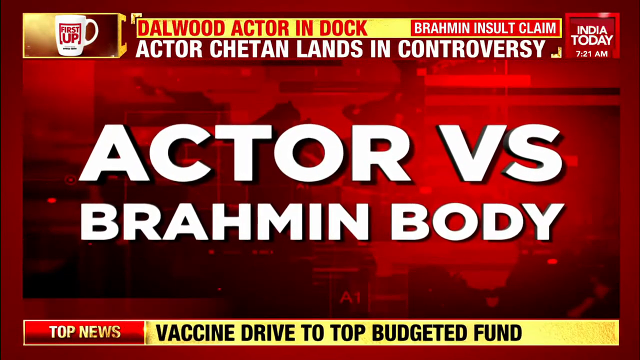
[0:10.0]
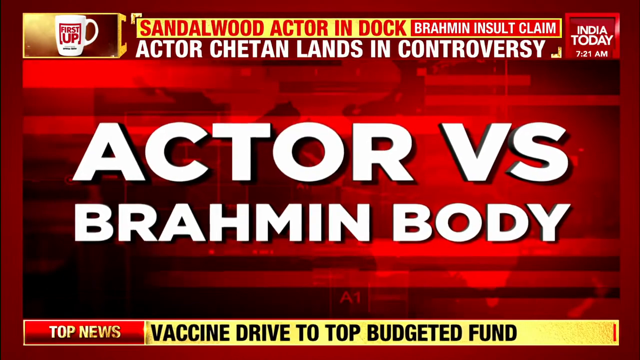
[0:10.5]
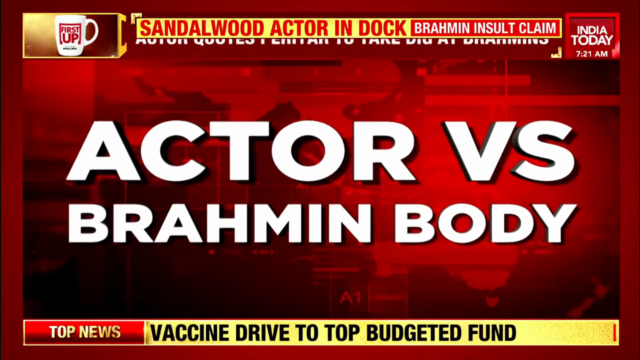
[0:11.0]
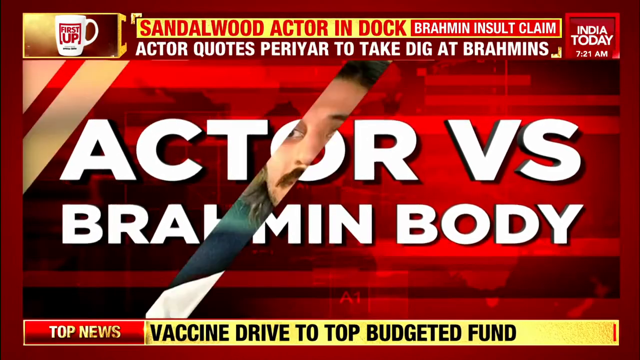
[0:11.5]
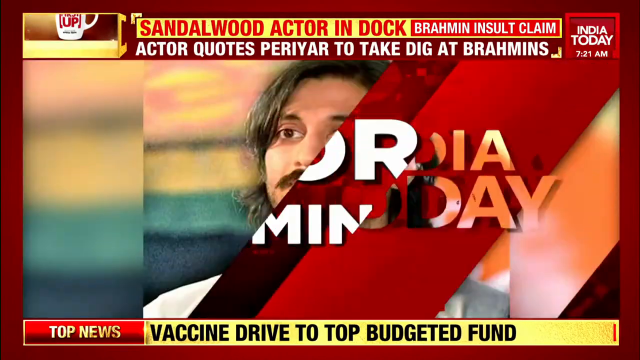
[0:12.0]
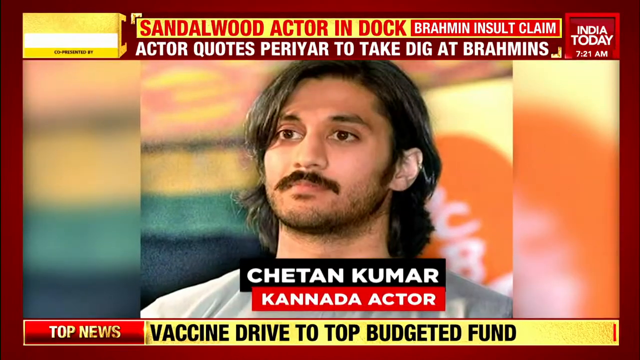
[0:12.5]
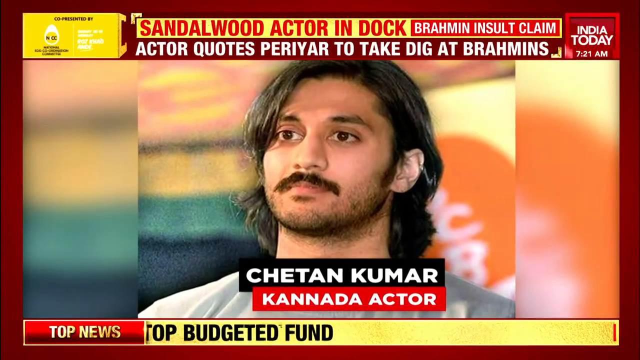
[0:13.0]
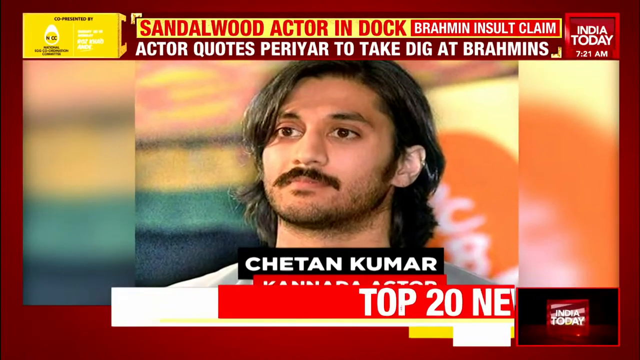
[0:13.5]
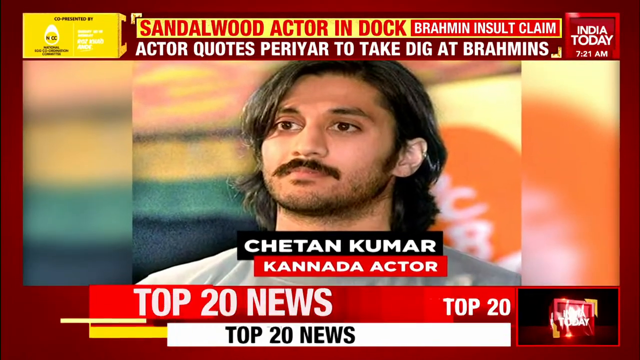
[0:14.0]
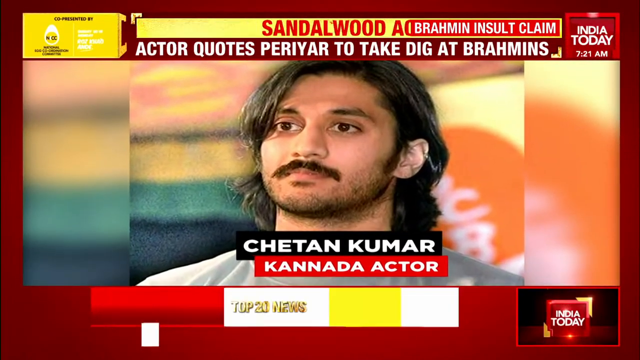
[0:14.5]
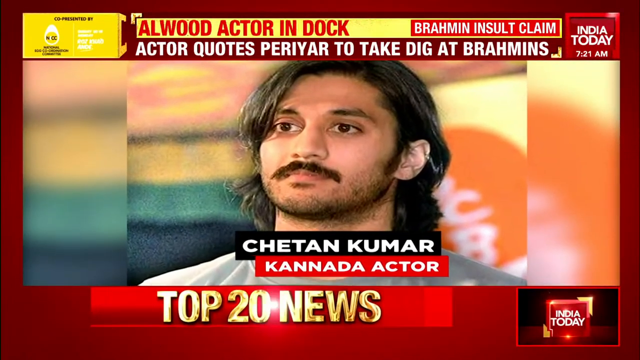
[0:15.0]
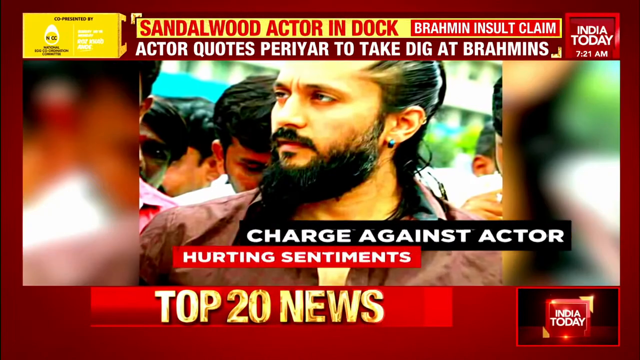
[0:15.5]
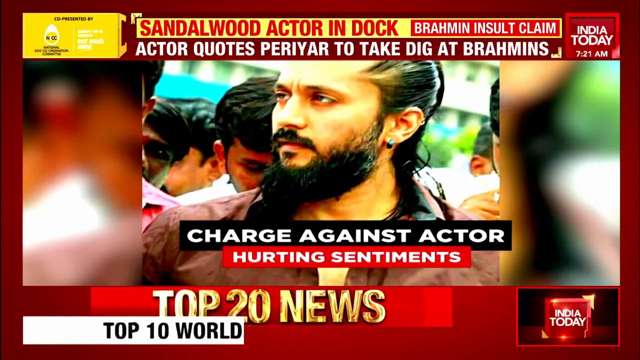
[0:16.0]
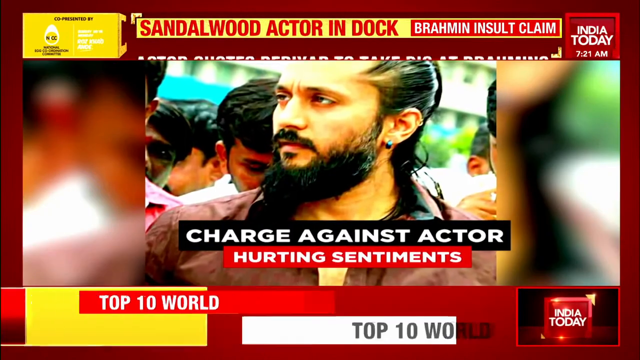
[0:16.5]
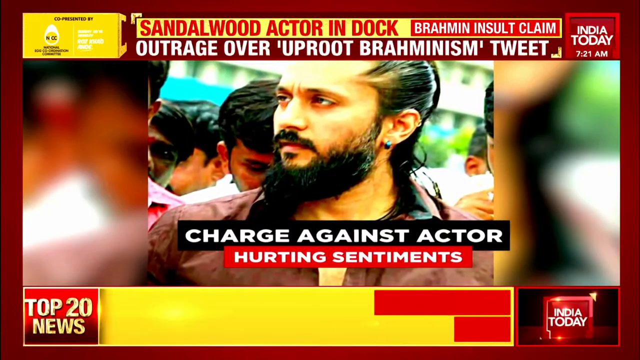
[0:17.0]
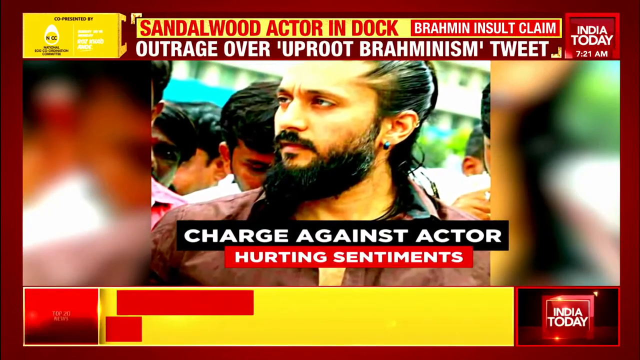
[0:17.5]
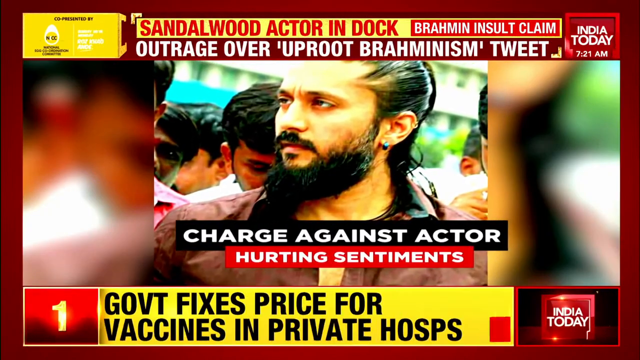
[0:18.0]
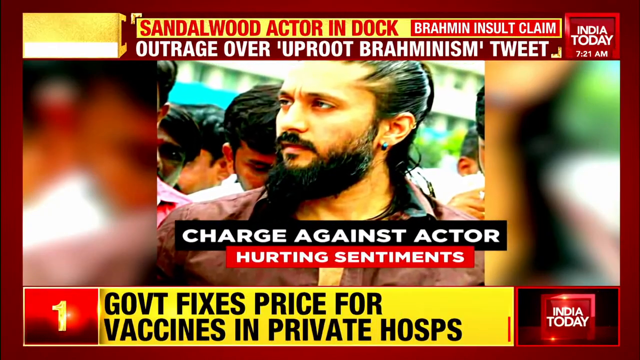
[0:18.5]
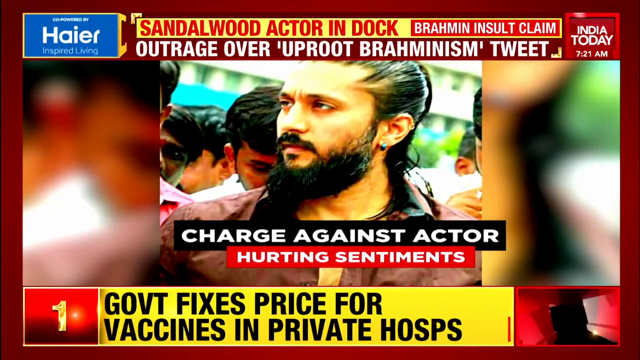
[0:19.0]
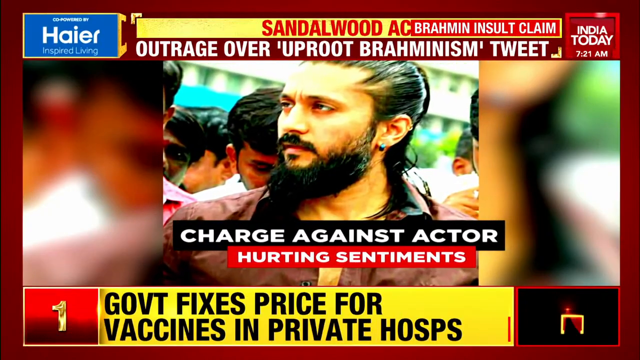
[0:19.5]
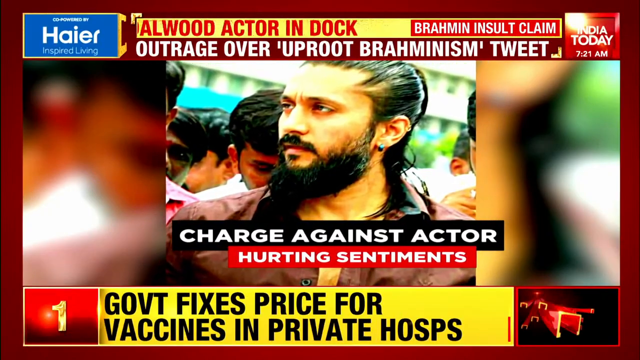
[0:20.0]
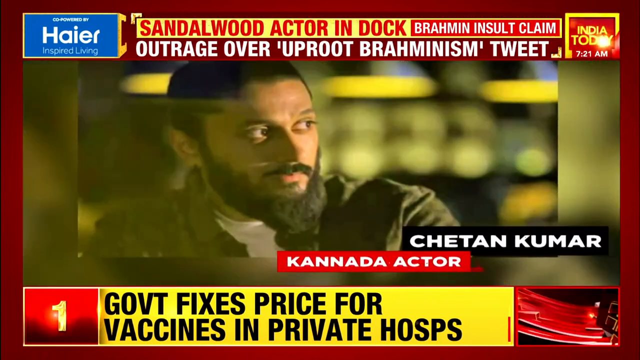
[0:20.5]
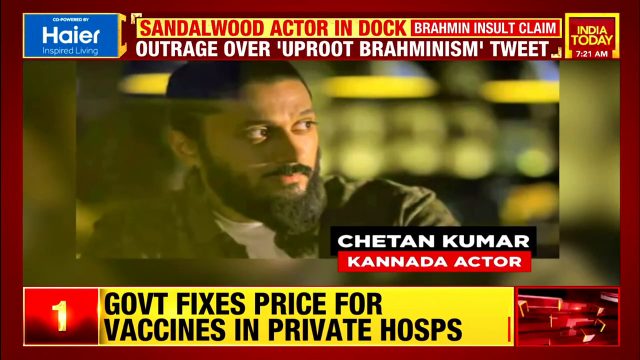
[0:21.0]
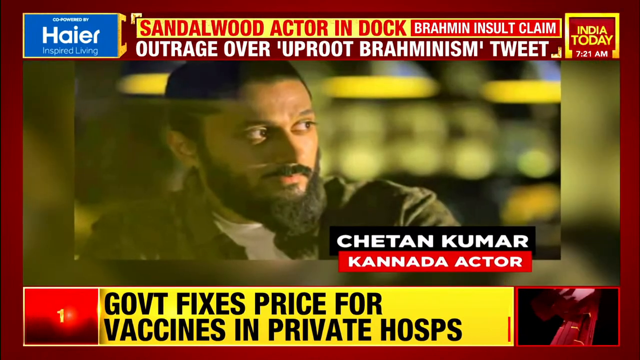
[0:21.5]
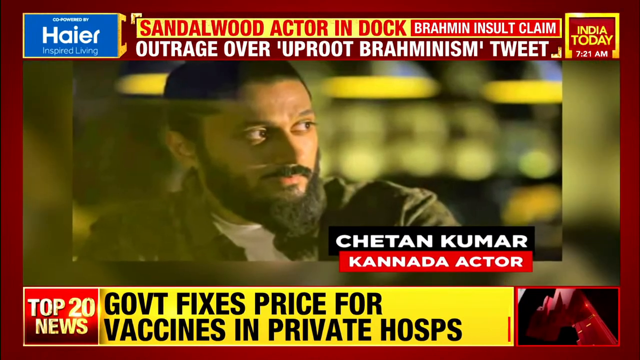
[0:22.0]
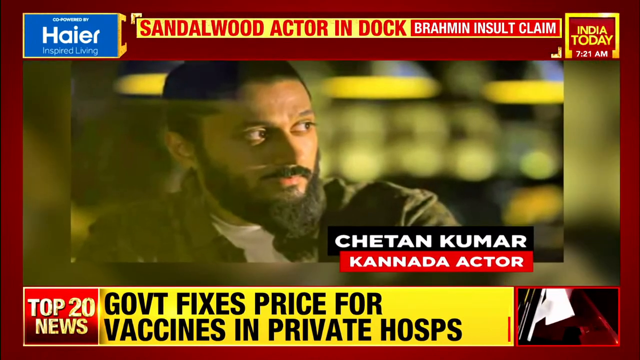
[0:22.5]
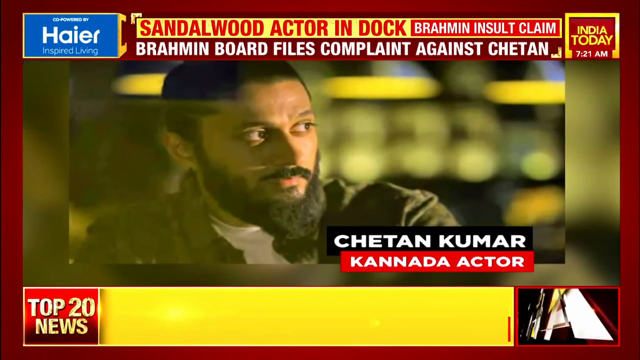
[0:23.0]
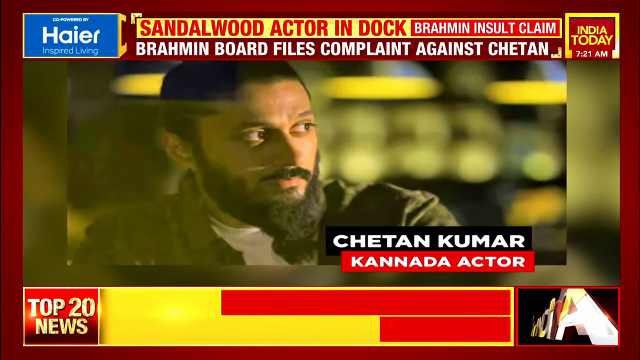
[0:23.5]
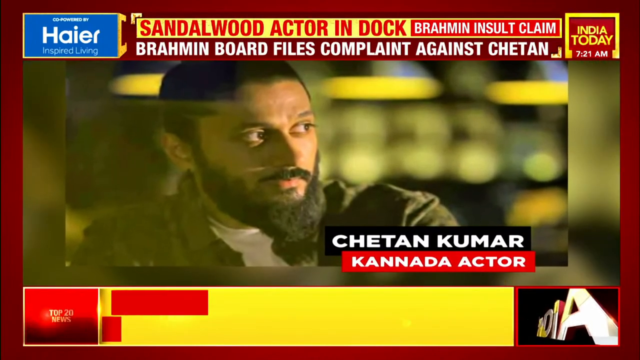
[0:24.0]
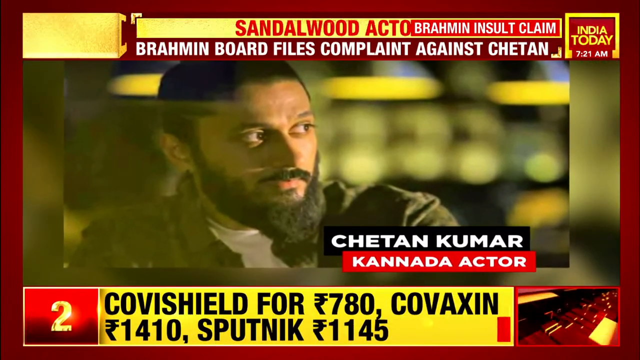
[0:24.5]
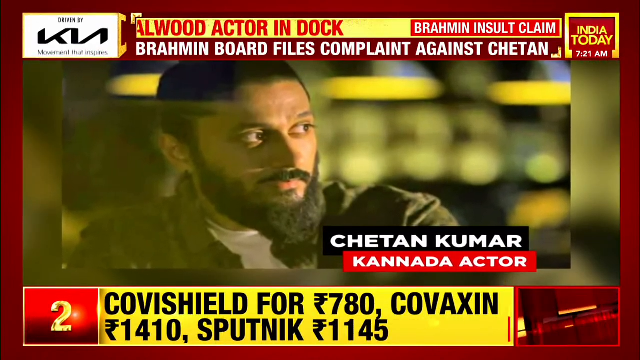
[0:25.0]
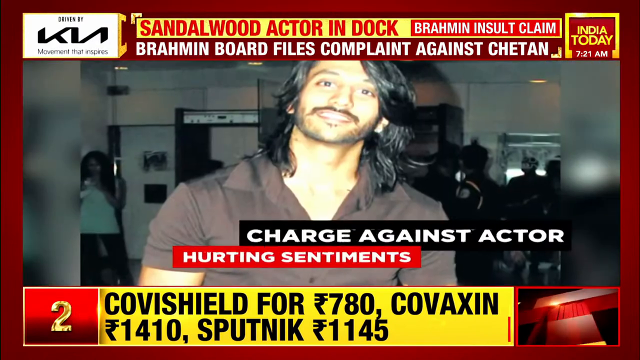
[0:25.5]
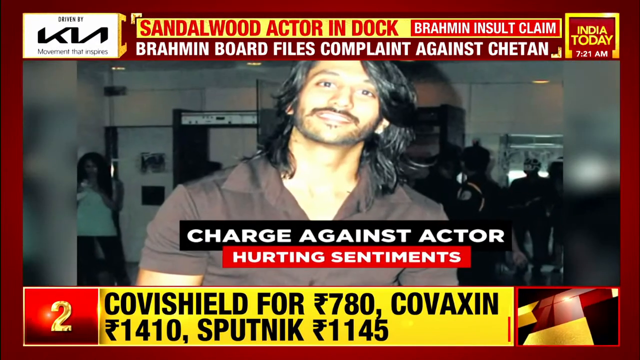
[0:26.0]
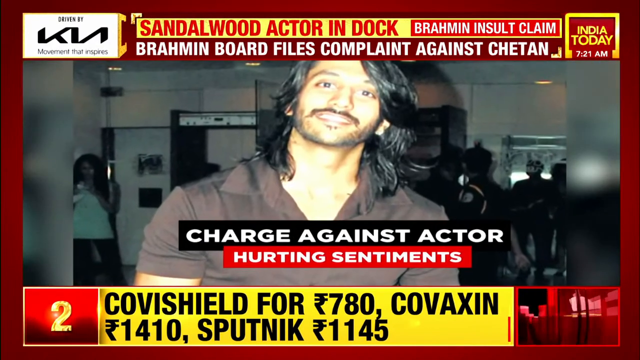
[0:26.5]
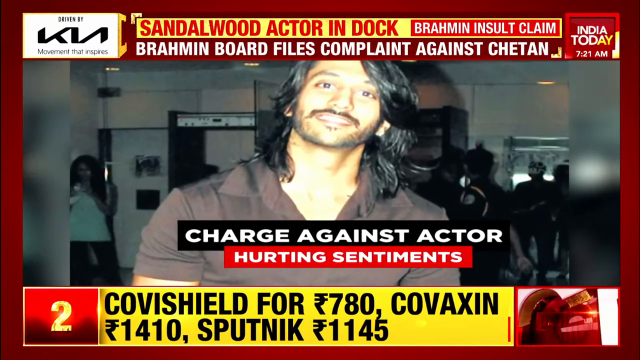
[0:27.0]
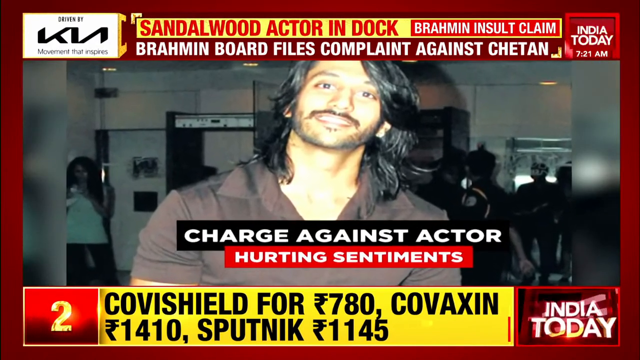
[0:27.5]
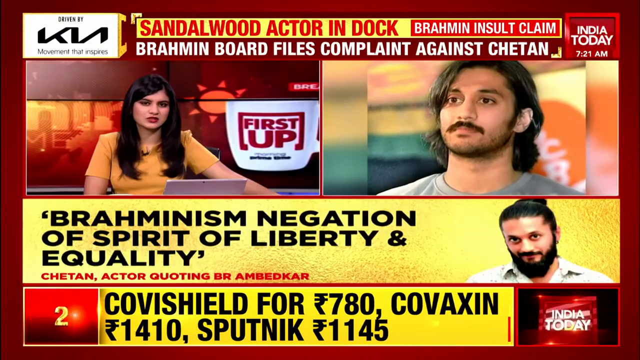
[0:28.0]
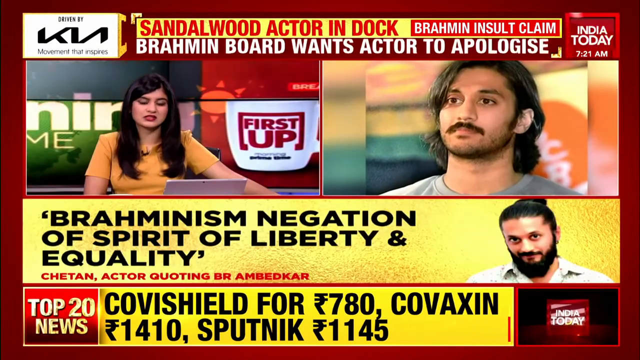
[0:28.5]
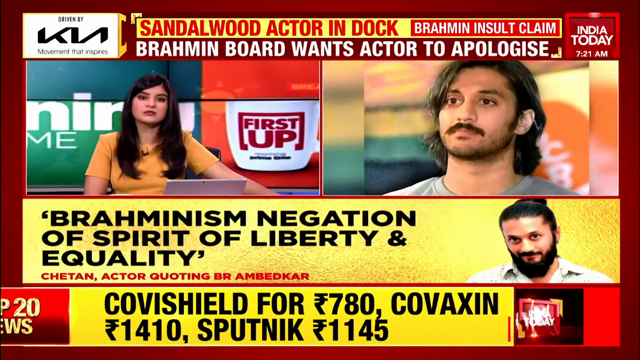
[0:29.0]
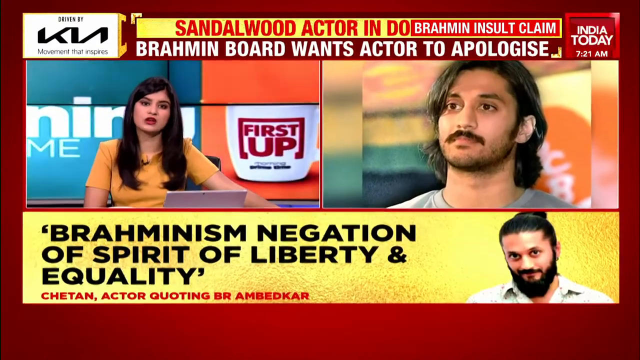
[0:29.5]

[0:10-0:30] The on-screen headline reads "actor versus Brahman body." The screen is busy. It shows an actor identified as Chetan Kumar, Canada actor, who has longish hair, a beard and a mustache. Text reads "Sandalwood actor in dock" and "Brahman insult claim," and another line begins "actor quotes." A time of 7:21 a.m. appears in the left corner. "Co-presented by" appears in a yellow box, but the name of the presenter cannot be read. "Top 20 news" appears at the bottom, along with the line "charge against the actor hurting sentiments." The actor is shown again, this time with a really big beard and a big goatee, and is again labeled Chetan Kumar, Canada actor. The screen then changes to a kind of dual screen: the news anchor, an Indian woman with long dark hair, is on the left, and the actor is on the right. Text reads "Brahmanism negation of spirit of liberty and equality," and another line begins "Chetan actor quoting."